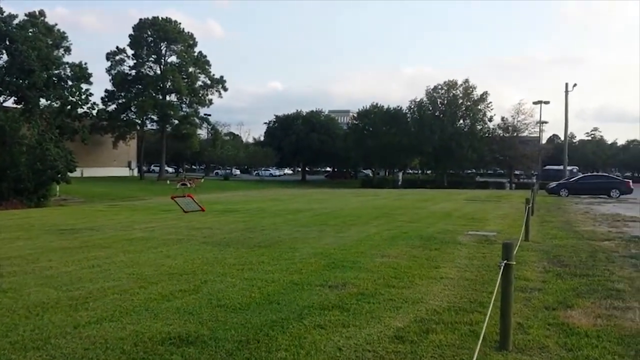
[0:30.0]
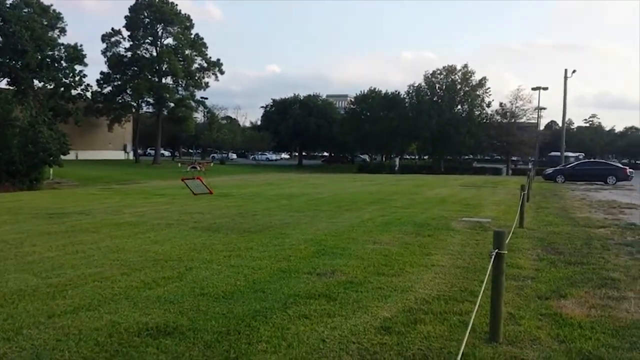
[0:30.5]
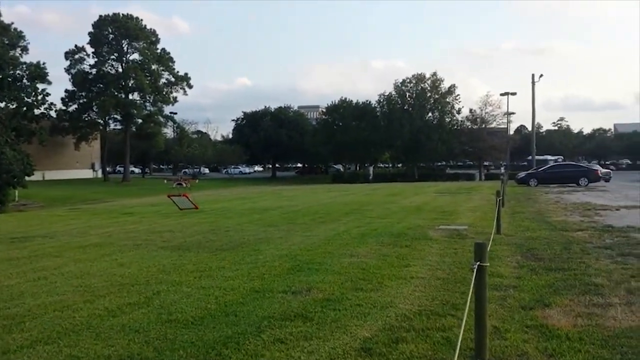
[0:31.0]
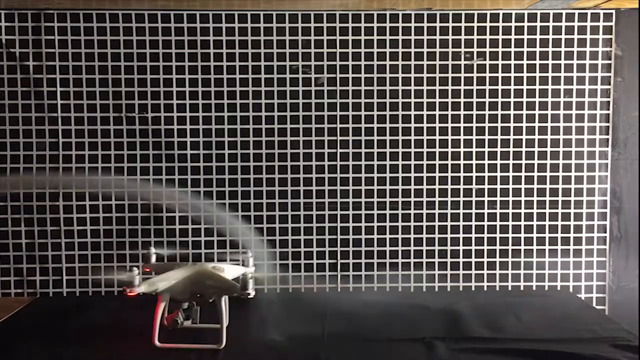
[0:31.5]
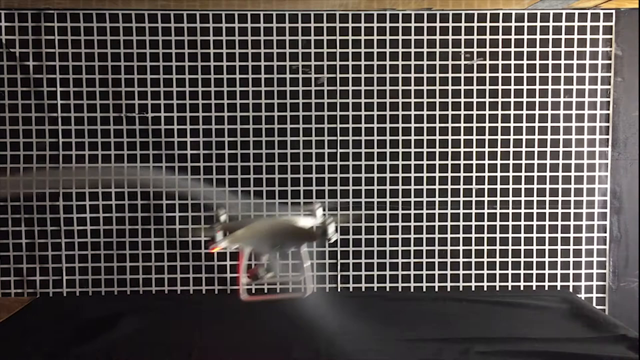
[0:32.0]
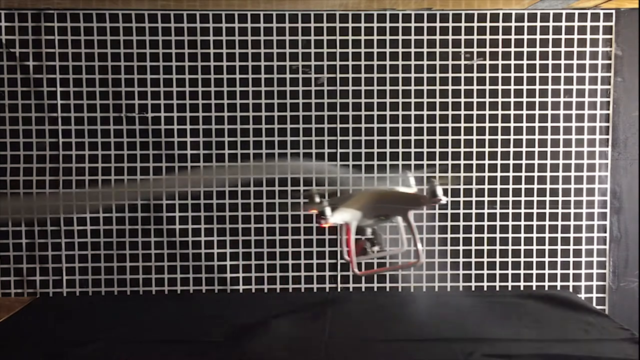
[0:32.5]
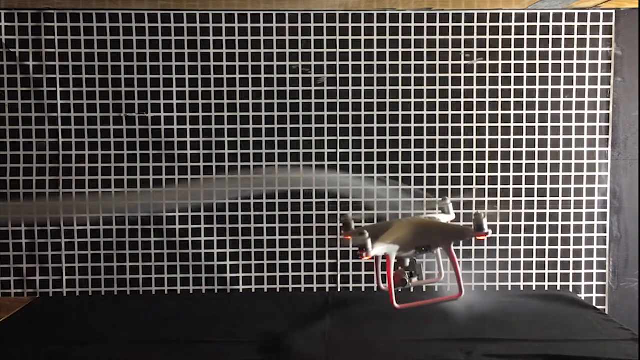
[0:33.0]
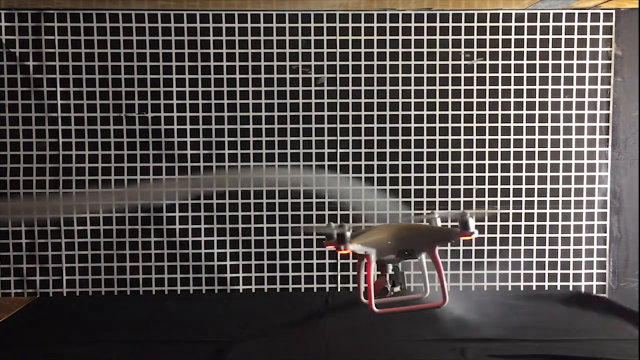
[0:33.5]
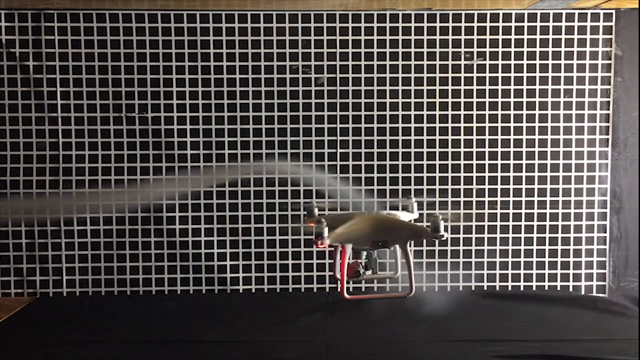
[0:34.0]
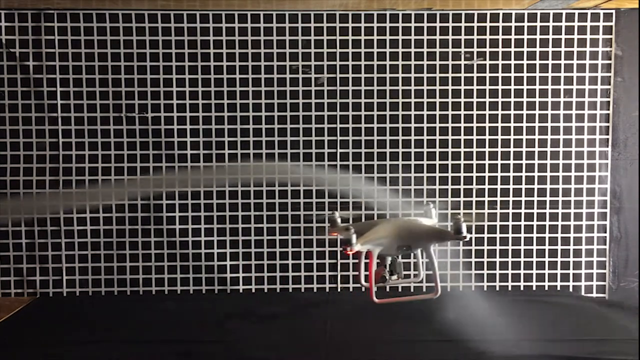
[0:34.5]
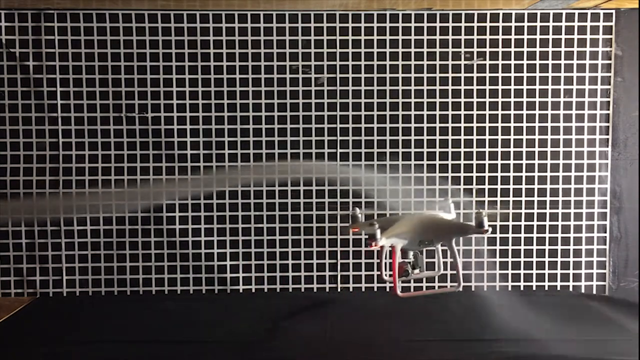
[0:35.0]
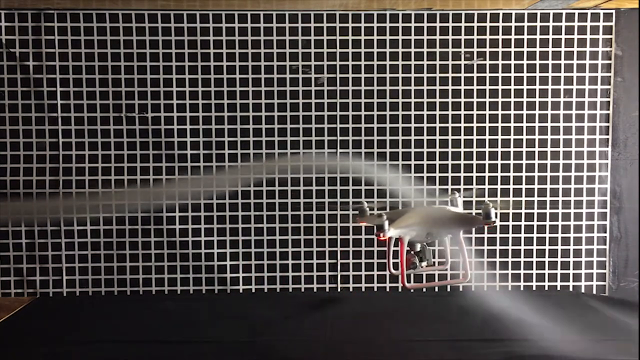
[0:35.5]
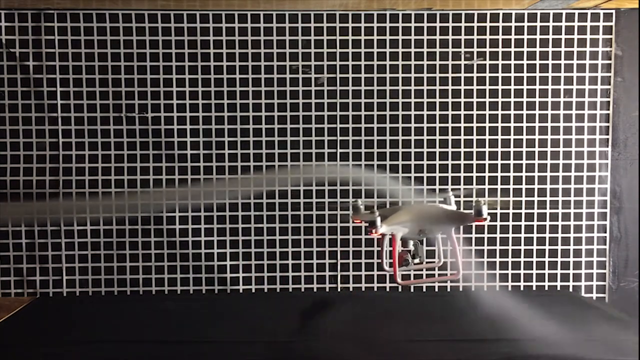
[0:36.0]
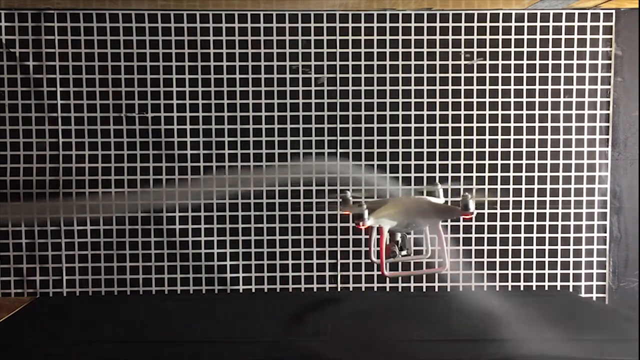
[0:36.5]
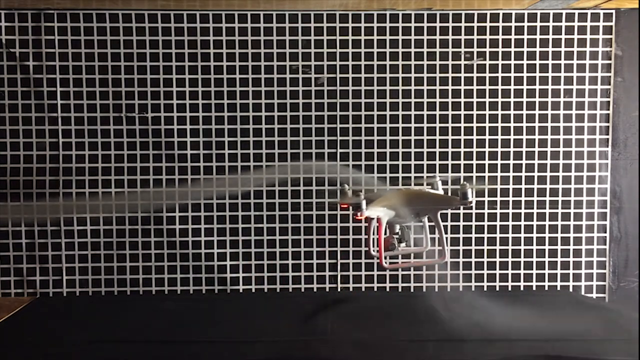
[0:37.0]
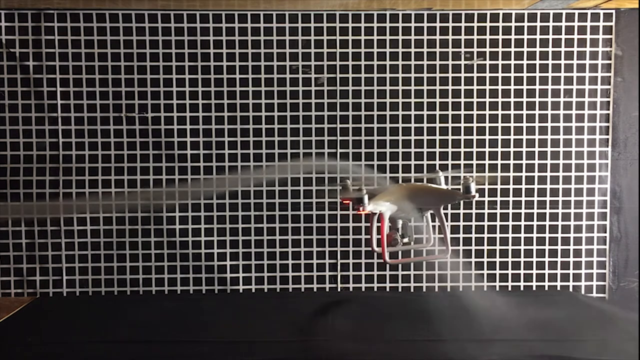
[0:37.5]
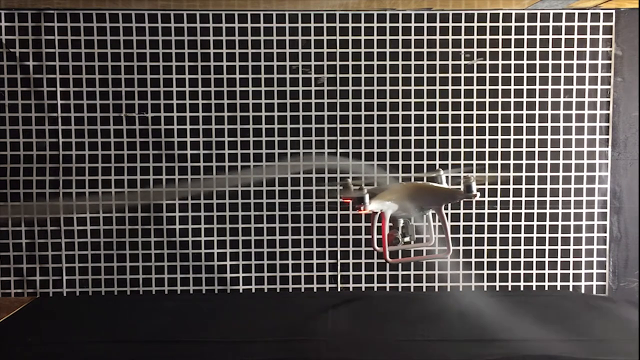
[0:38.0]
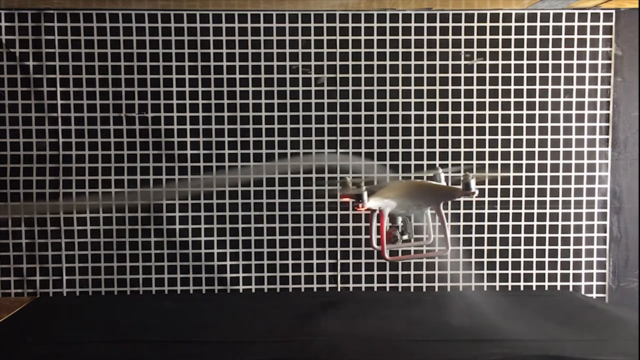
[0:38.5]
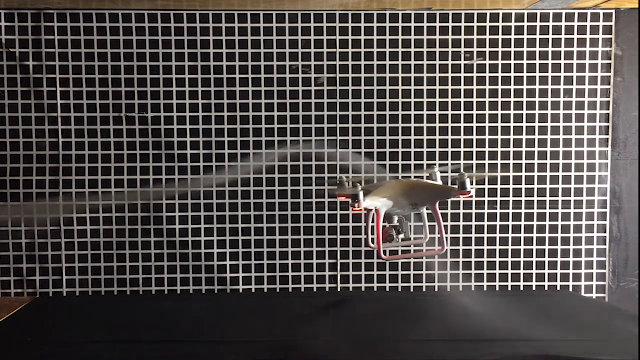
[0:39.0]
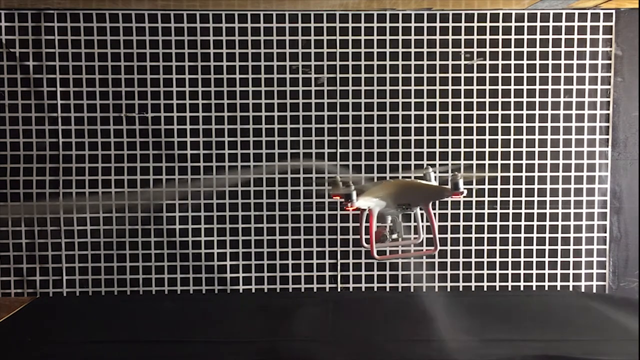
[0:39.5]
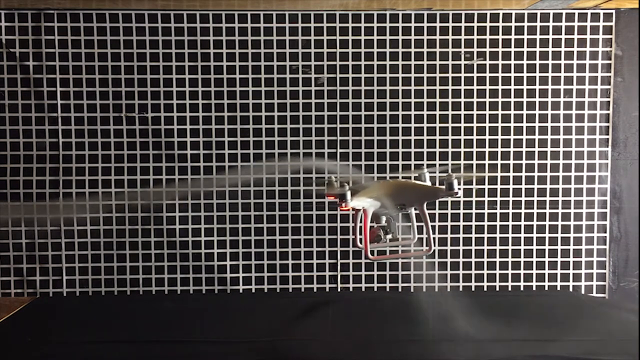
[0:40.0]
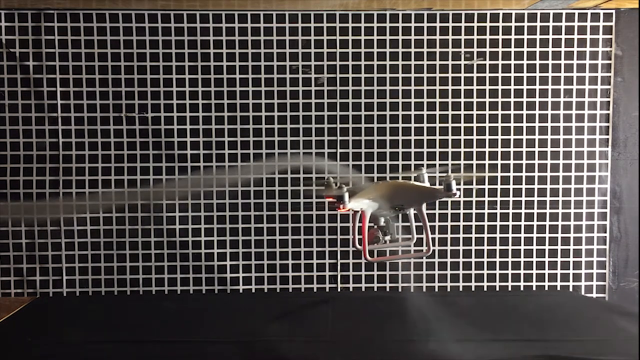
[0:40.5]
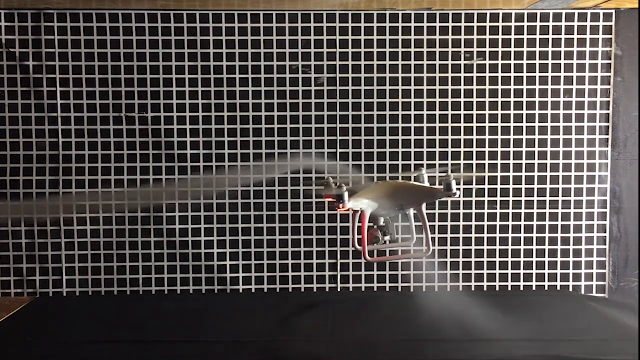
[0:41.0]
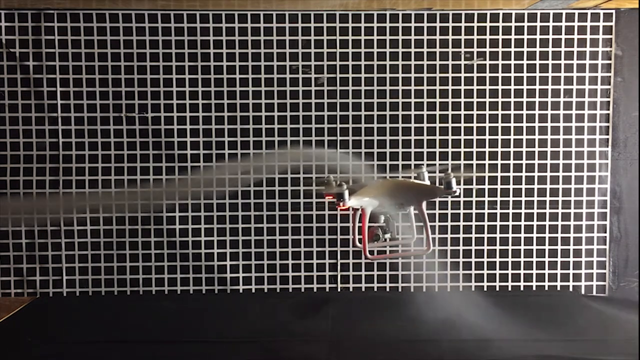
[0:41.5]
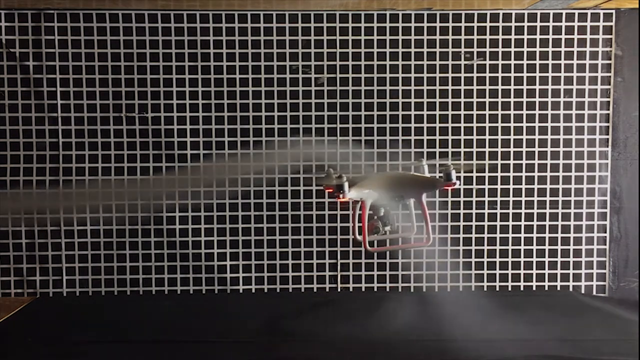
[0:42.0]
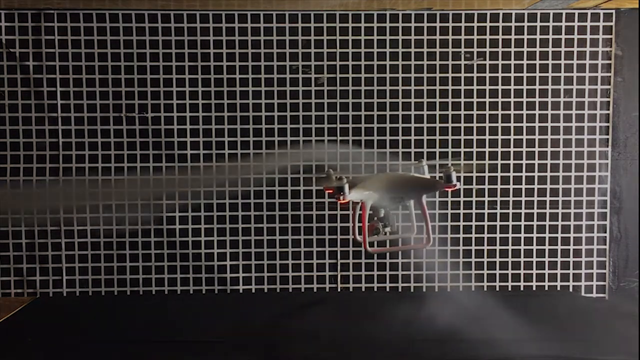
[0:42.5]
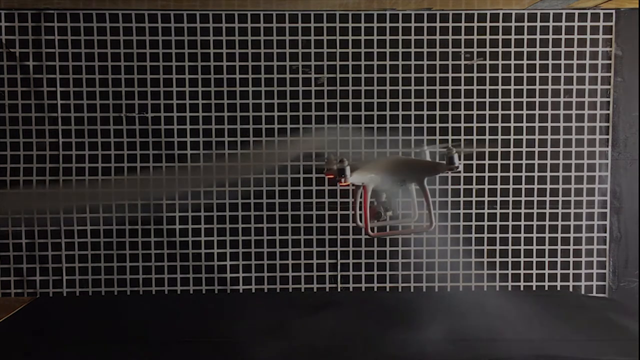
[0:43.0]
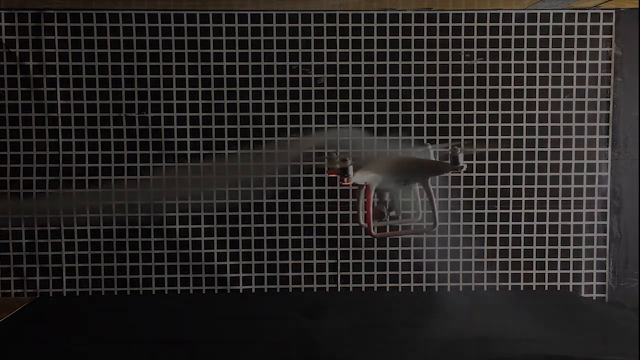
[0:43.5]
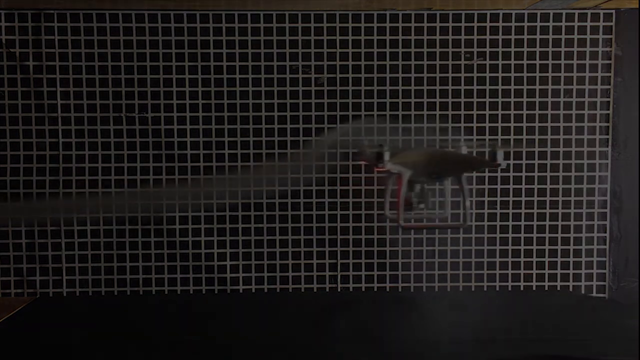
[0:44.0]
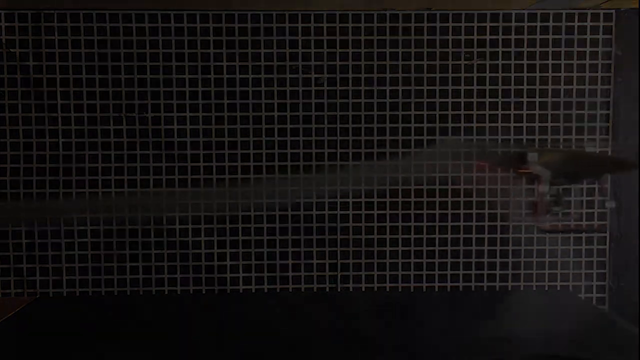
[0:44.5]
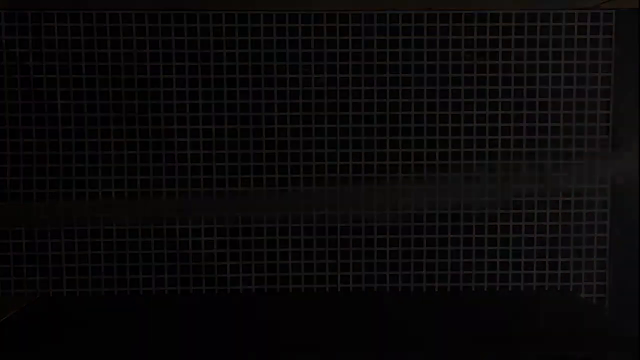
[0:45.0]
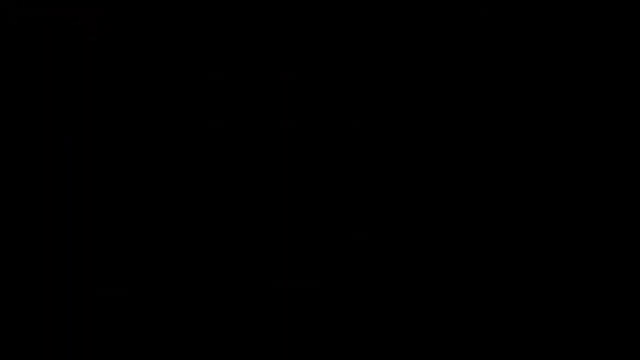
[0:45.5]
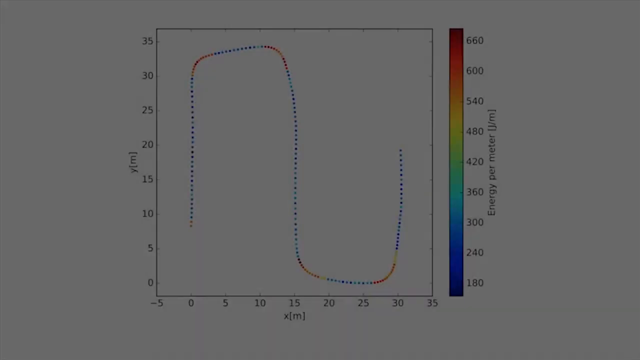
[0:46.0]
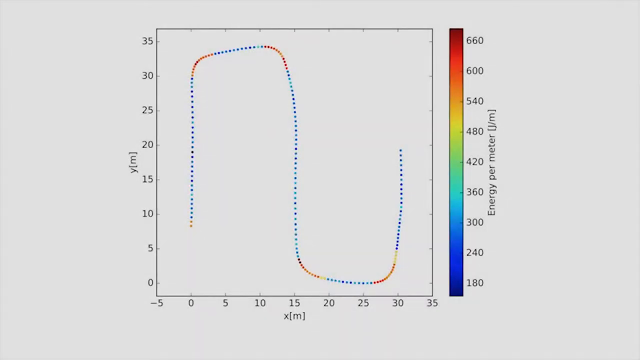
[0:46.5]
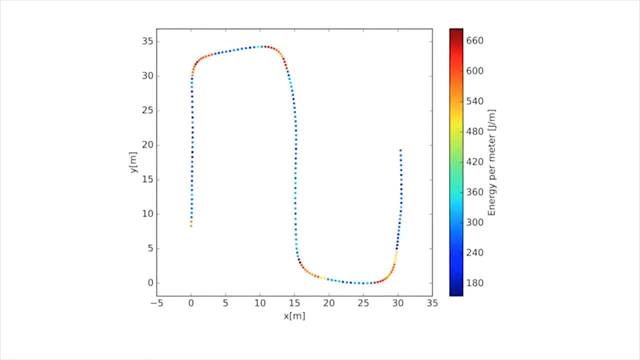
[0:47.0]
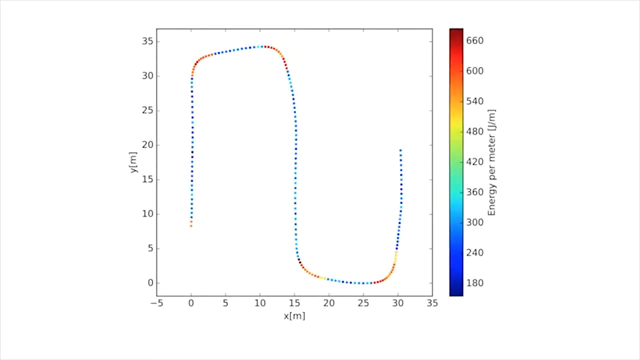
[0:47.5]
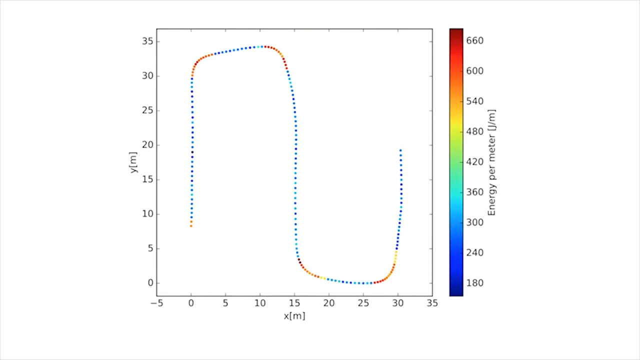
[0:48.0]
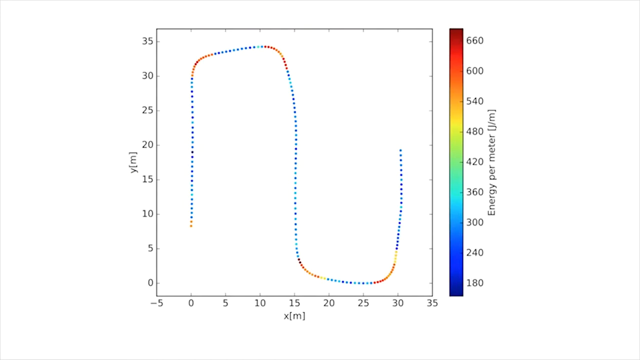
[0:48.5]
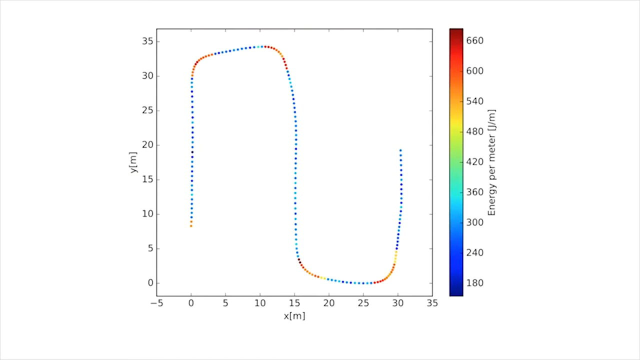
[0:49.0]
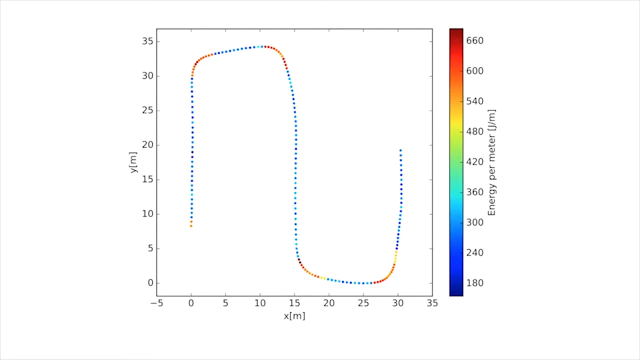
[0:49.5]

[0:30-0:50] The scene is still outdoors, and no people are visible. The drone flies toward the right side, and the parking lot comes into view. Then the drone is indoors, and something like water or wind is squirted at it from the left-hand side; it does not stop the drone, which rises steadily higher and higher. The screen goes black, then comes back with a white background showing a graph on the left. The vertical axis is labeled "y (m)" with numbers 0, 5, 10, 15, 20, 25, 30, 35, and the bottom axis is labeled "x (m)" with numbers -5, 0, 5, 10, 15, 20, 25, 30, 35. On the right side it says "energy per meter" with a color scale: dark blue at the bottom at 180 and a deep dark red at the top at 660. A curvy line on the graph looks like a backwards letter S.